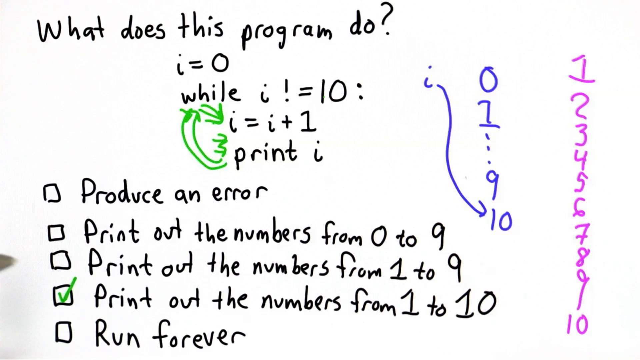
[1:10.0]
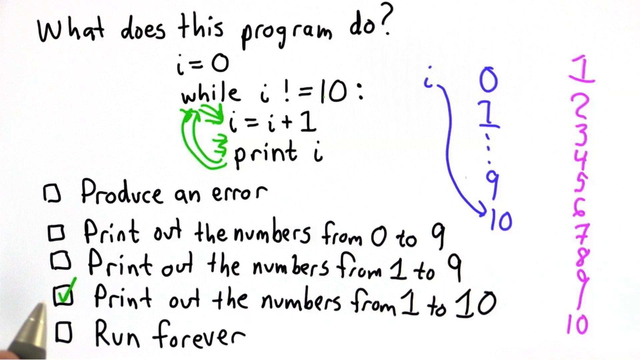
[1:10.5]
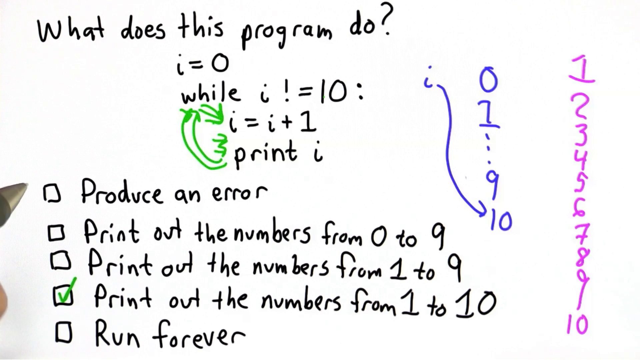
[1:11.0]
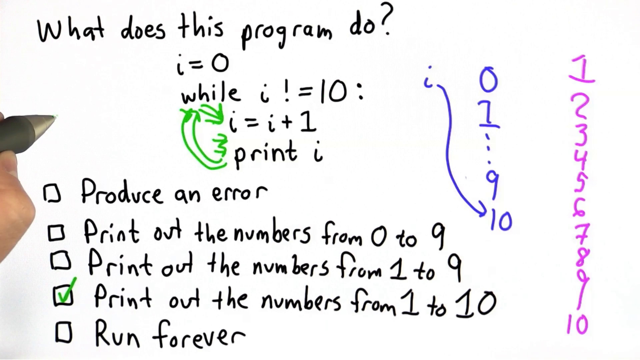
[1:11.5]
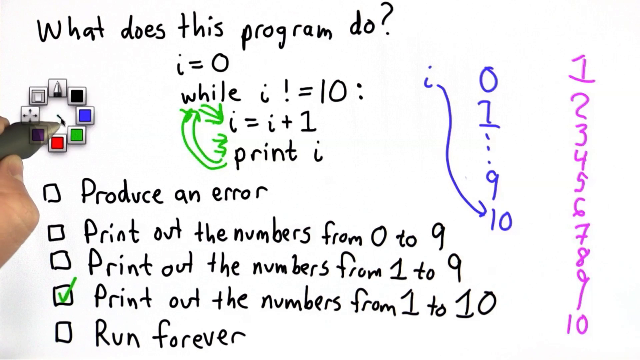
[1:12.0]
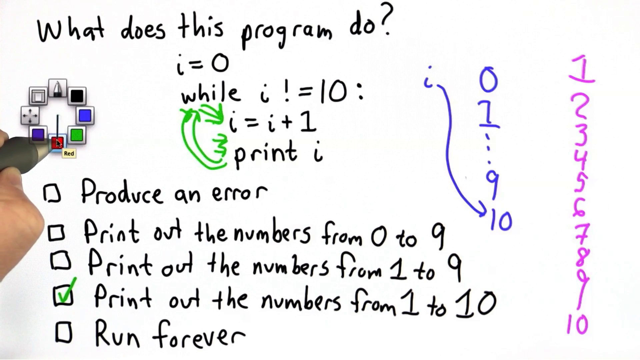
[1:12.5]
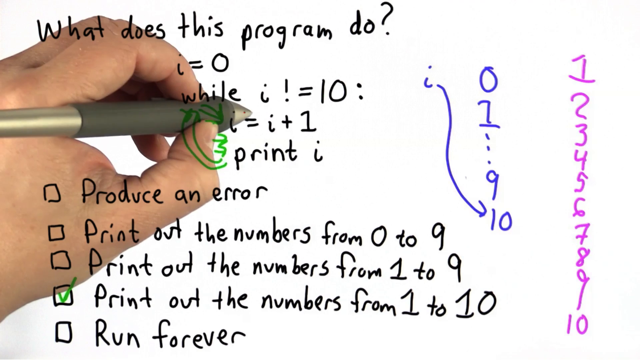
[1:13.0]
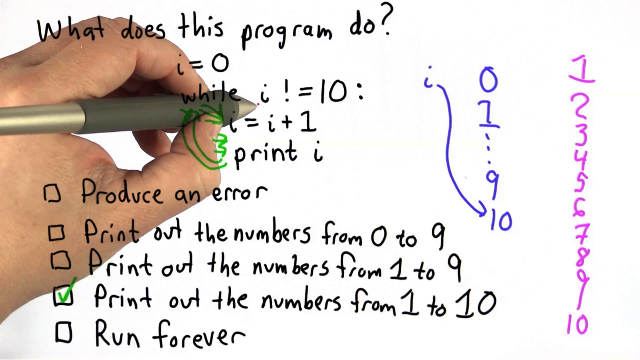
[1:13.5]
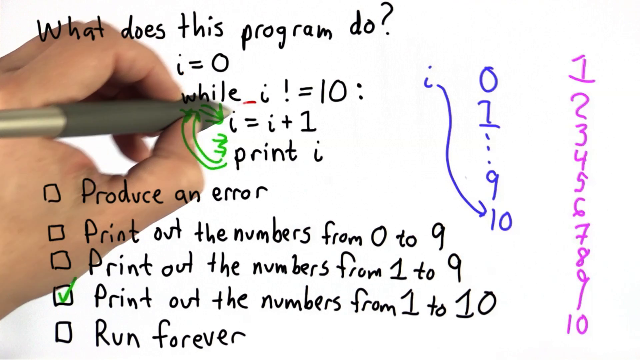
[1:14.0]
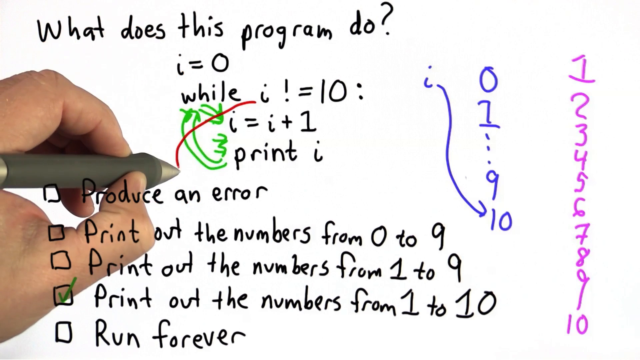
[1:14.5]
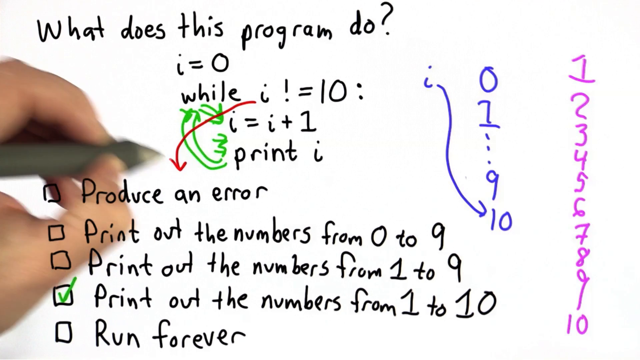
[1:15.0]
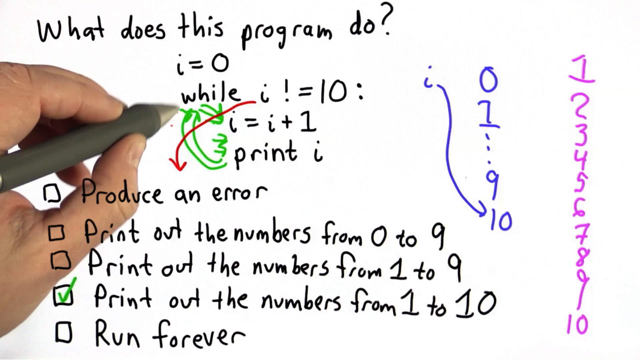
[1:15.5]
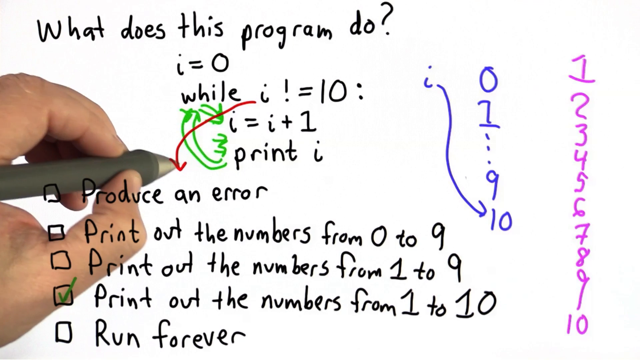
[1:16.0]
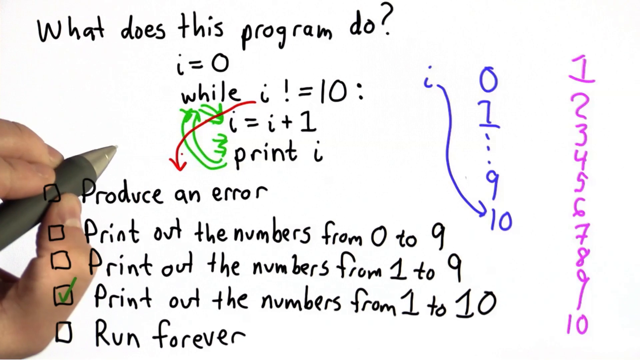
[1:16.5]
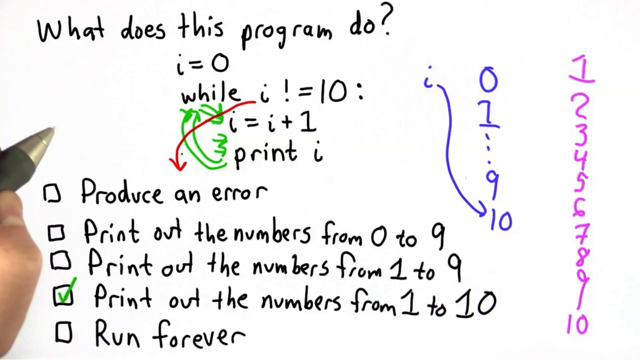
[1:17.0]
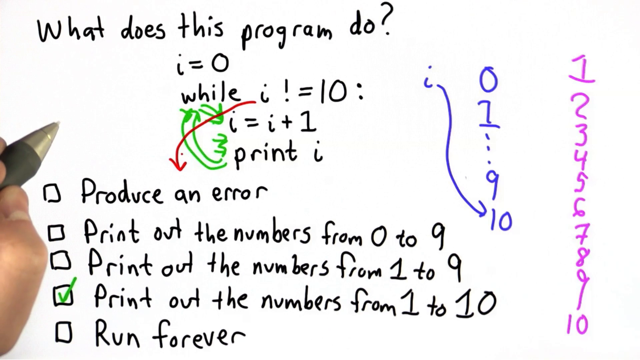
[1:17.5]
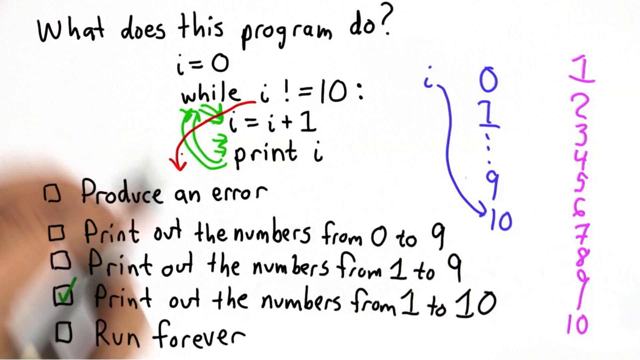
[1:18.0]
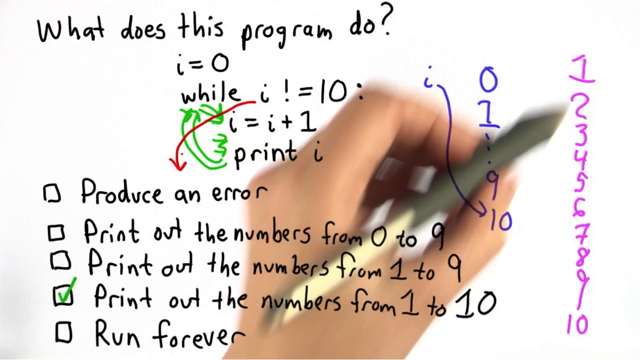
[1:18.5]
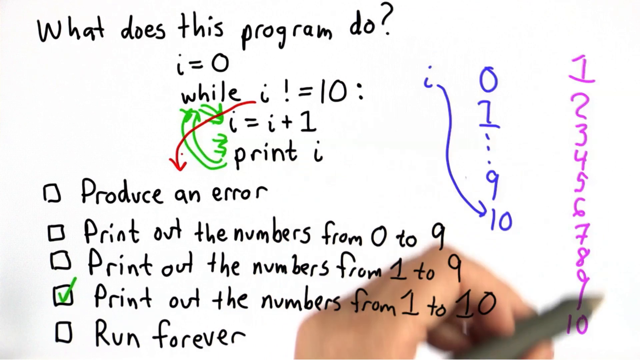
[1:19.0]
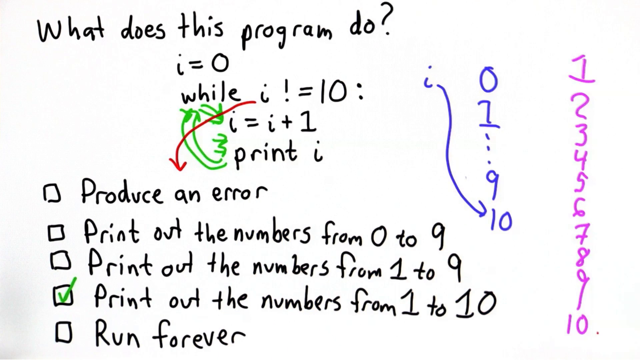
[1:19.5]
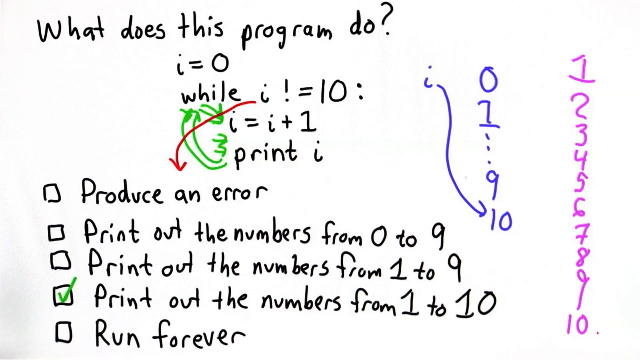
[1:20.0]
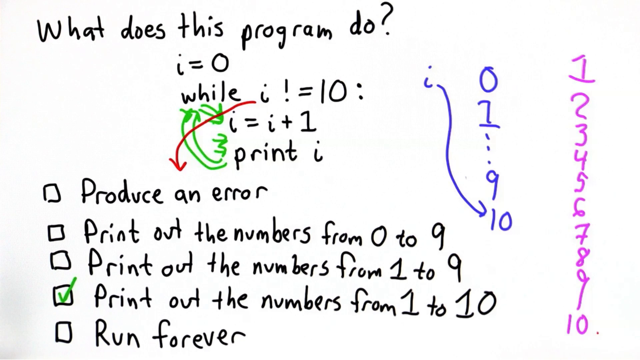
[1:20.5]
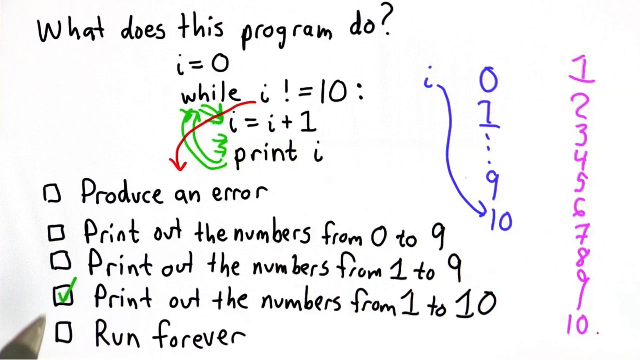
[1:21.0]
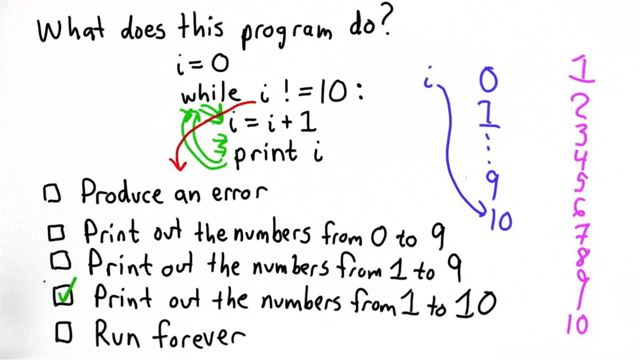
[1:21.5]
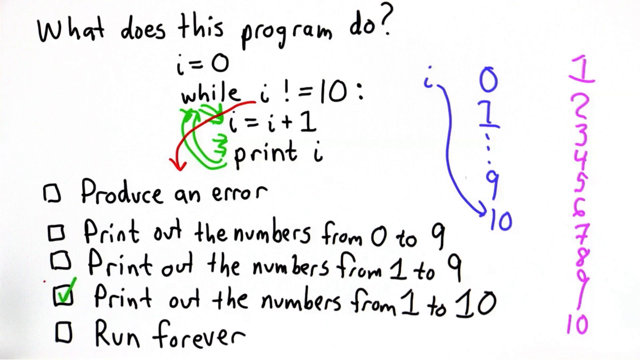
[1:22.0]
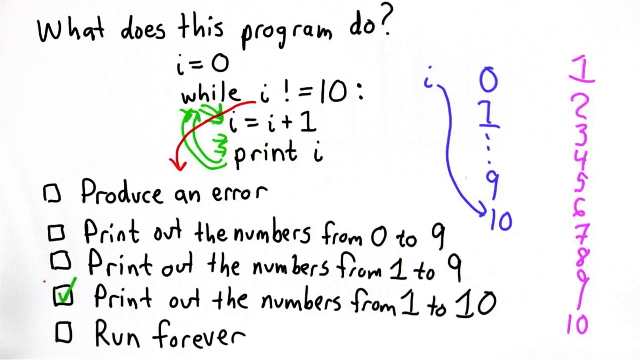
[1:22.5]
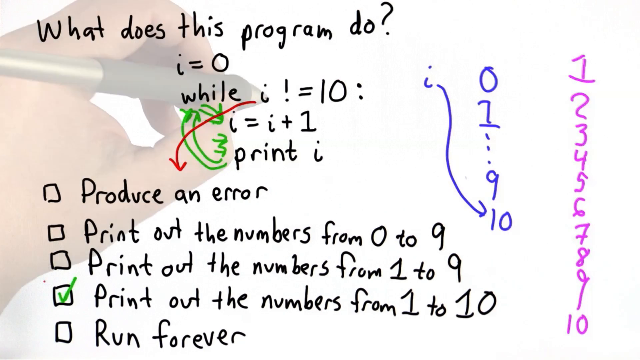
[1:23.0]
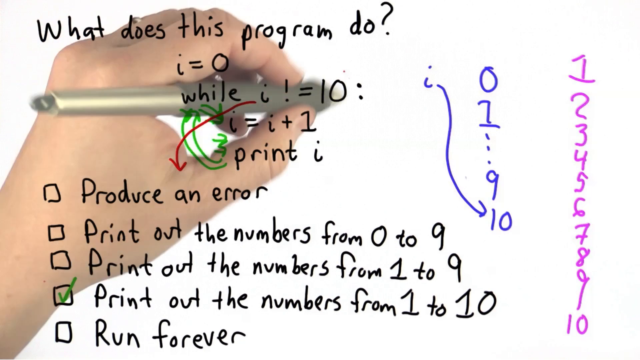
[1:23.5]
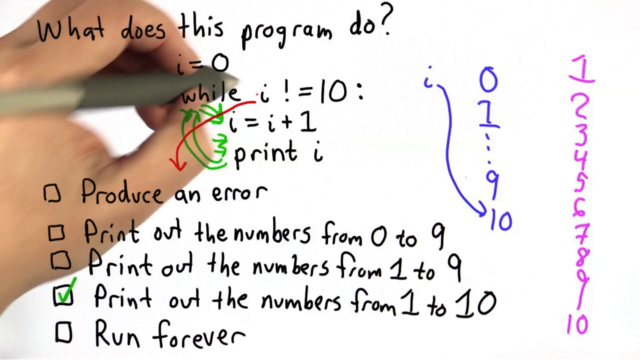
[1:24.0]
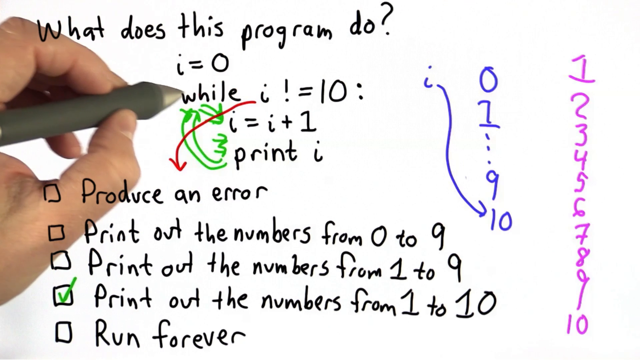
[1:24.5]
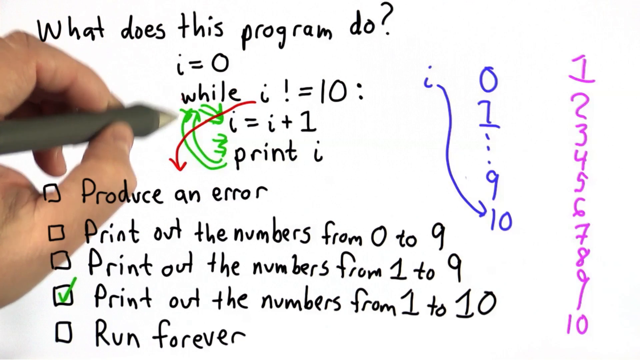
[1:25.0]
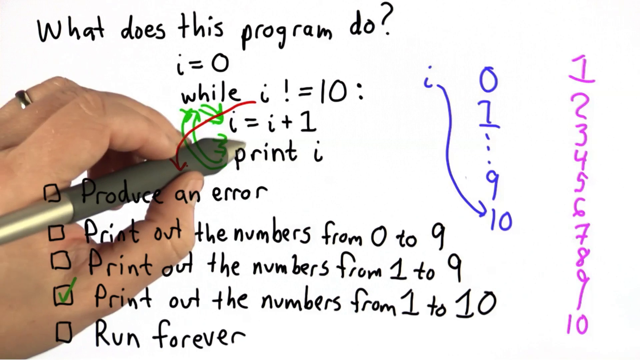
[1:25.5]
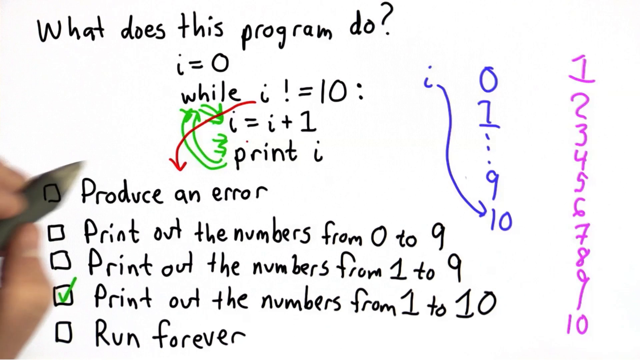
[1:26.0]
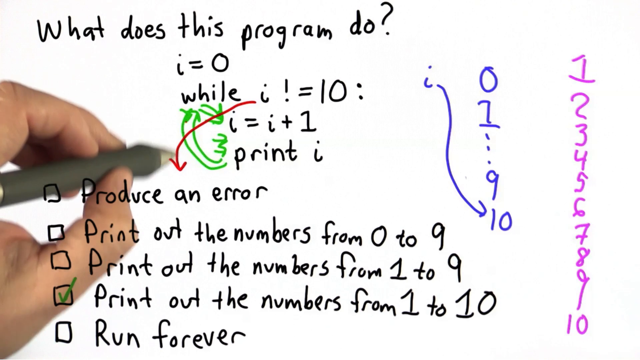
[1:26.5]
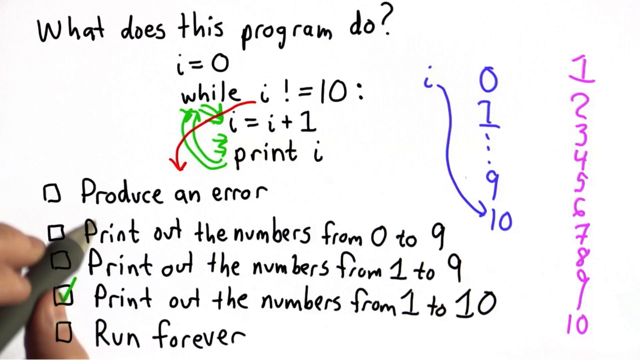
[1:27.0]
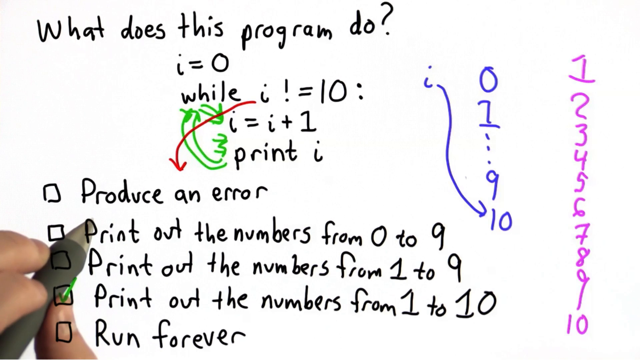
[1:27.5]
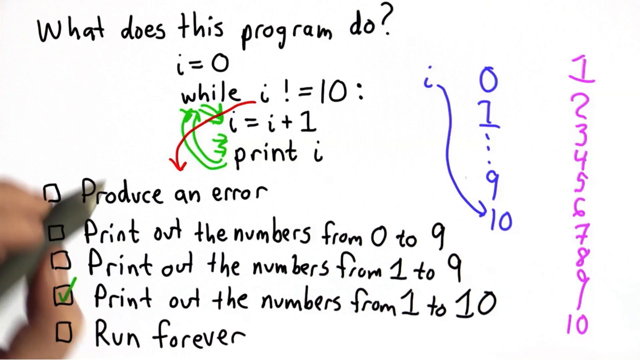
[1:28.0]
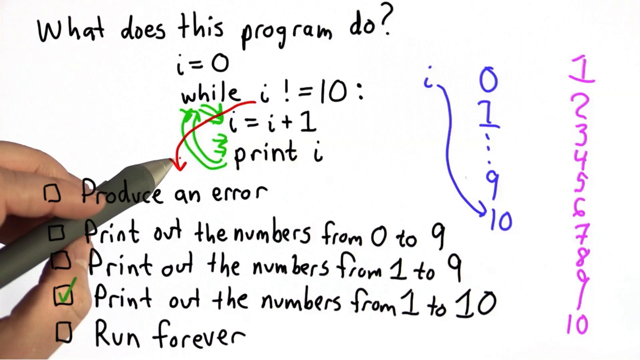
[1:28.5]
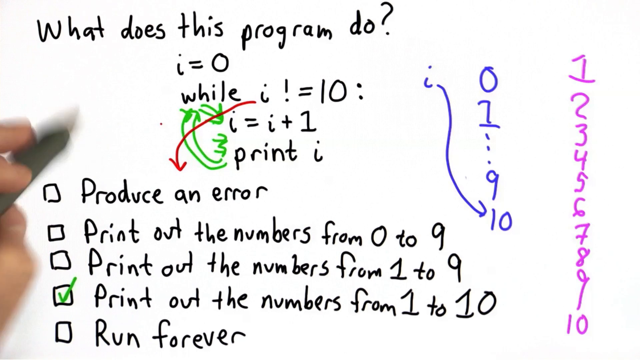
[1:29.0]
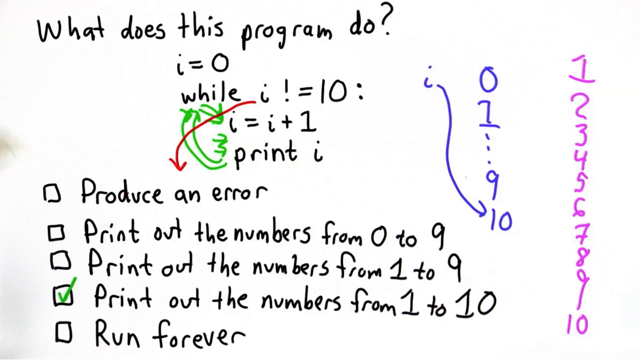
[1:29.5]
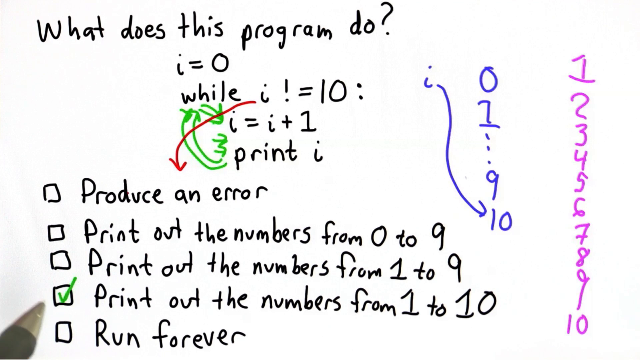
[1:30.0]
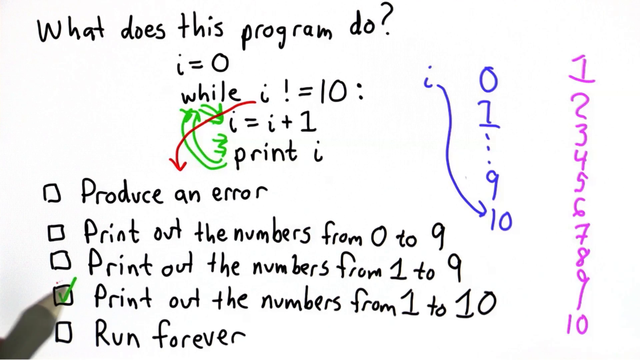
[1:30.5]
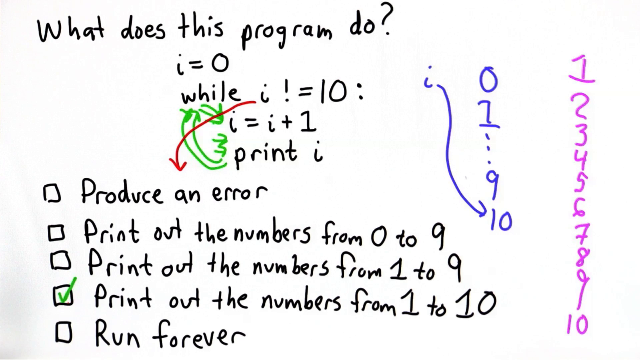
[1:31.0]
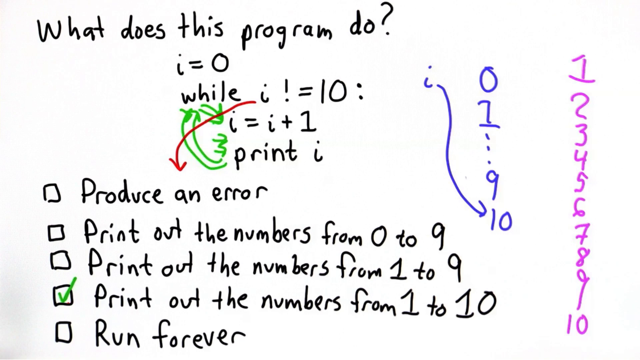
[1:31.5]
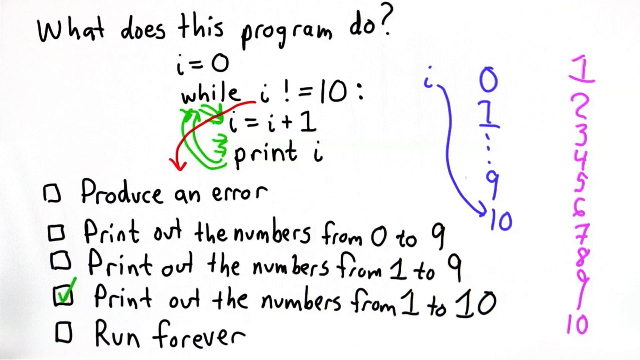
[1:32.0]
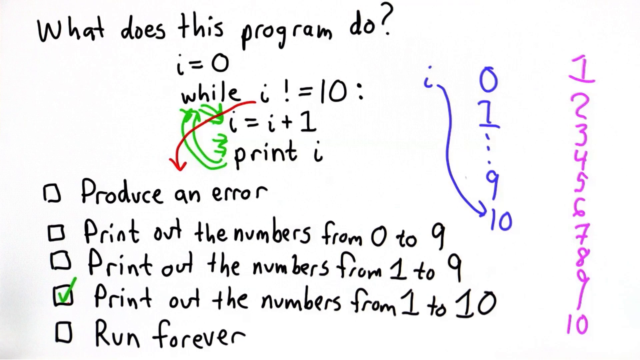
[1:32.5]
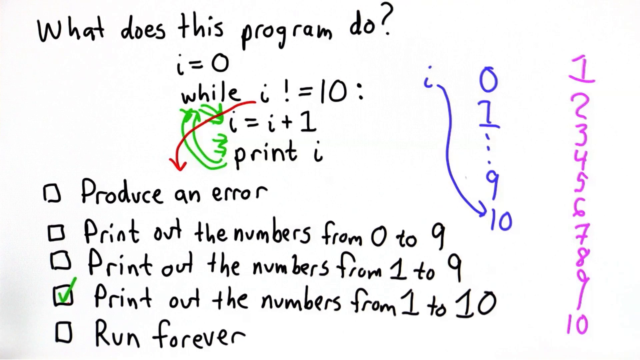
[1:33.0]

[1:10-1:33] The page shows the handwritten problem: "what does this program do? i = nought while i != 10: i = i + 1 print i". On the left-hand side is a vertical series of handwritten boxes: "produce an error", "print out the numbers from nought to nine", "print out the numbers from one to nine", "print out the numbers from one to ten" and "run forever", with box four ticked in green. Over on the left-hand side of the screen are a purple i and then a zero; underneath the blue zero is a blue one, then three vertical dashes, then a blue nine and a blue ten, with a blue bendy arrow from the small i down to the ten. To the right of the blue numbers is a column of purple numbers from one to ten. Two green arrows point from the "while" to the small i beneath it, two bendy green arrows come from "print" up to "while", and two very small green arrows are just above "print", above the bottom of the bendy green arrows. The pen picks the colour wheel, changes to red, and draws a red arrow from the small i after "while" down to just above the word "an" in "produce an error". The pen follows the purple numbers 1 to 10 down, then follows the red arrow again without making a mark, hovers, and makes a little circle around the green tick.